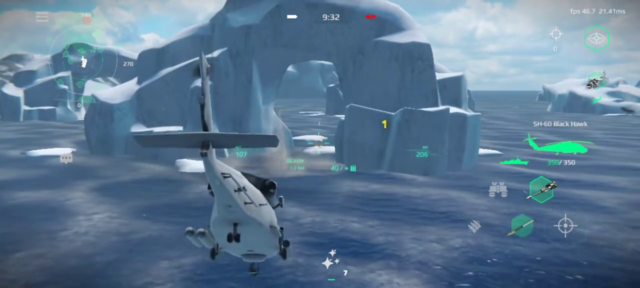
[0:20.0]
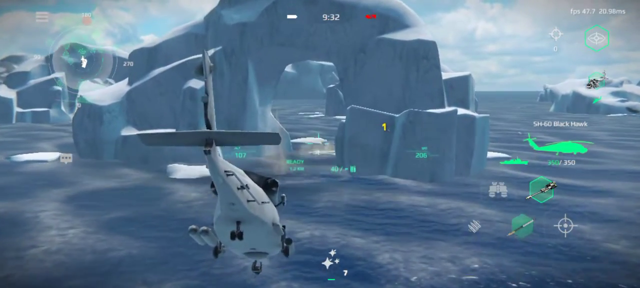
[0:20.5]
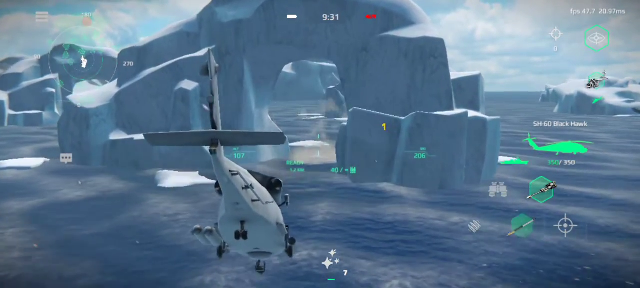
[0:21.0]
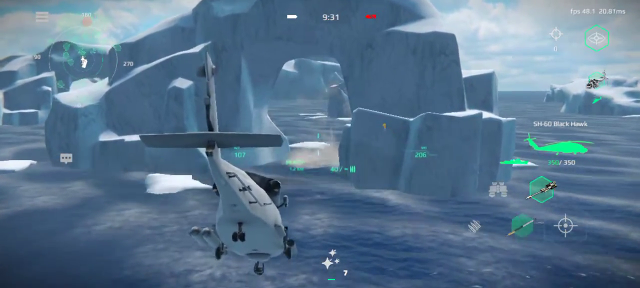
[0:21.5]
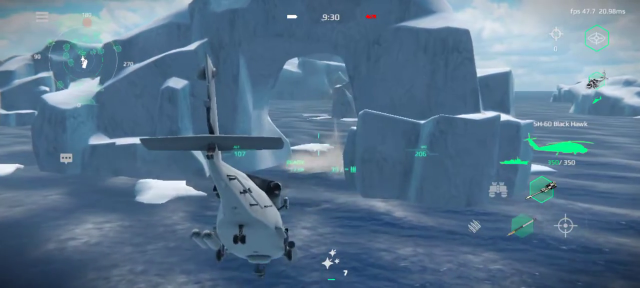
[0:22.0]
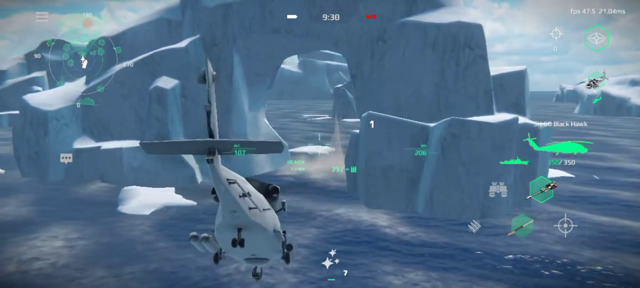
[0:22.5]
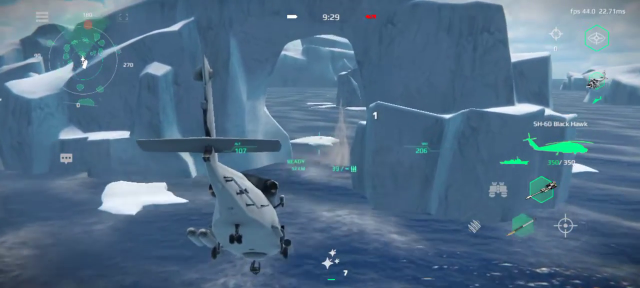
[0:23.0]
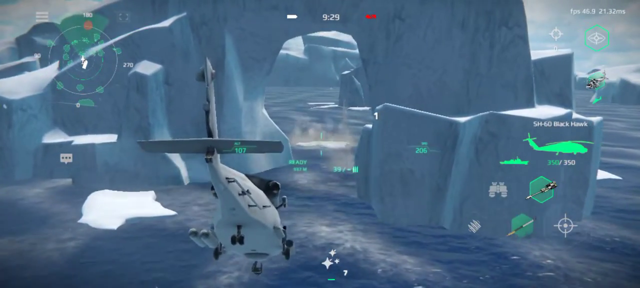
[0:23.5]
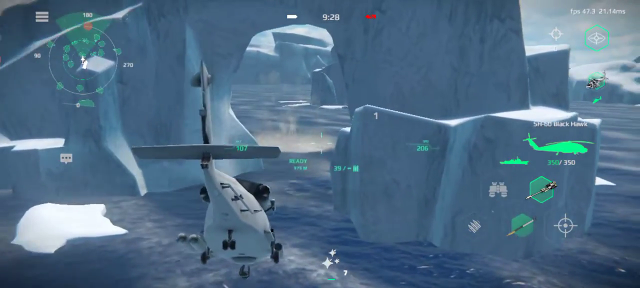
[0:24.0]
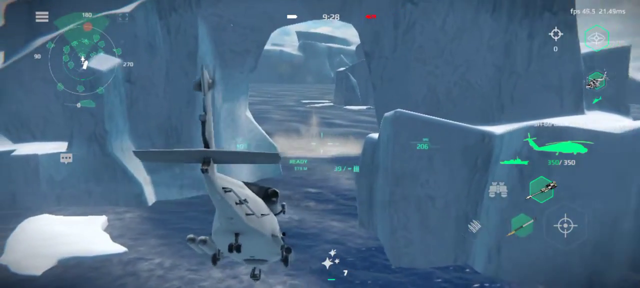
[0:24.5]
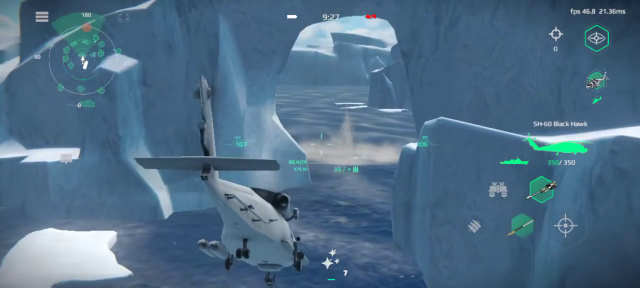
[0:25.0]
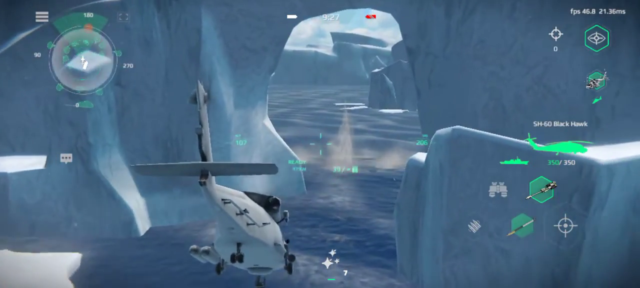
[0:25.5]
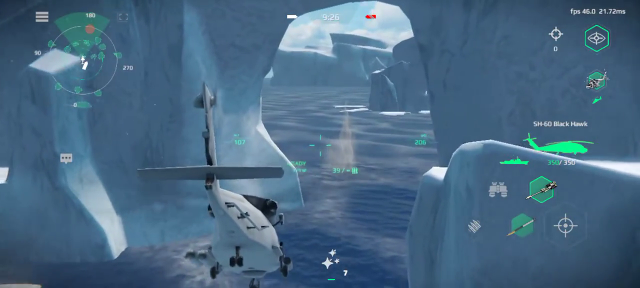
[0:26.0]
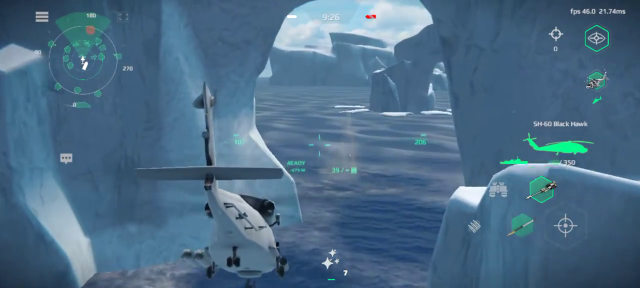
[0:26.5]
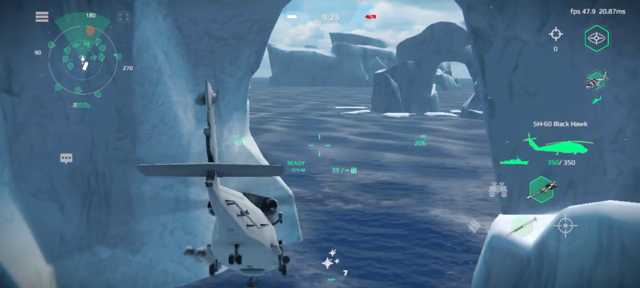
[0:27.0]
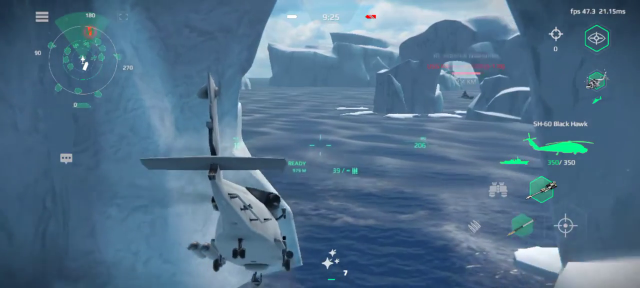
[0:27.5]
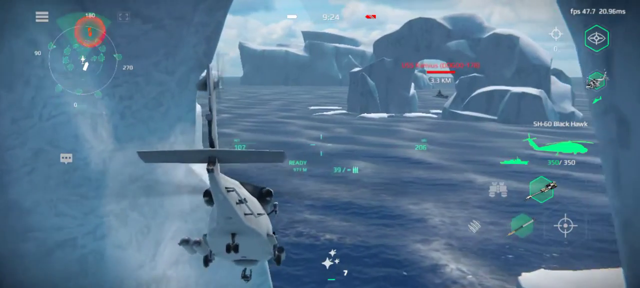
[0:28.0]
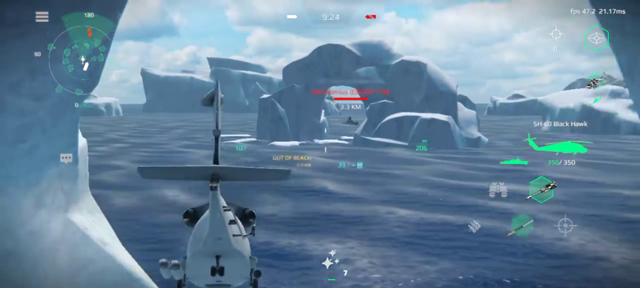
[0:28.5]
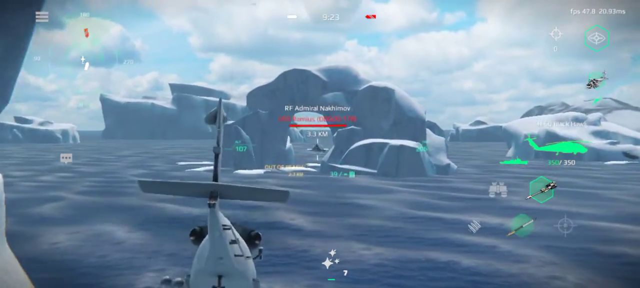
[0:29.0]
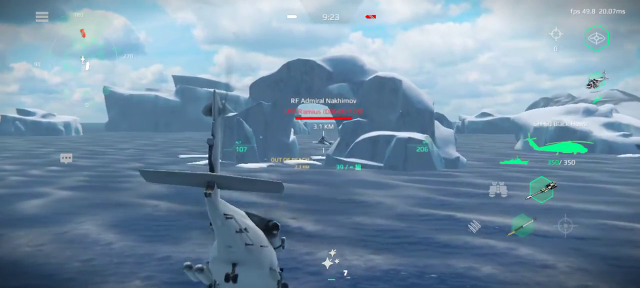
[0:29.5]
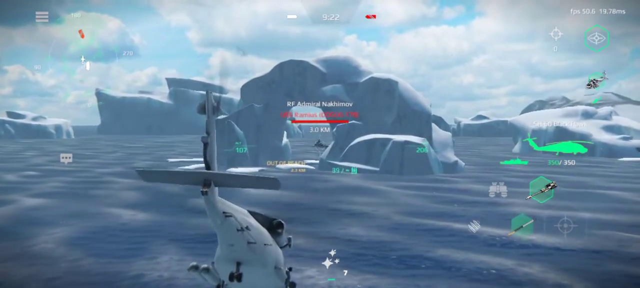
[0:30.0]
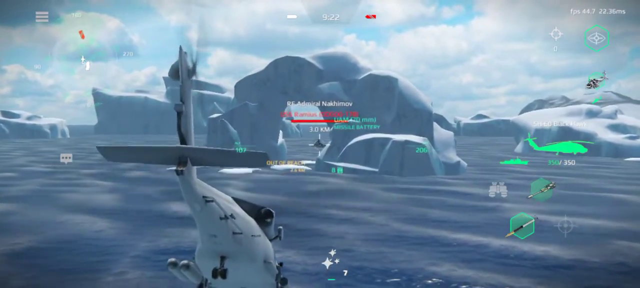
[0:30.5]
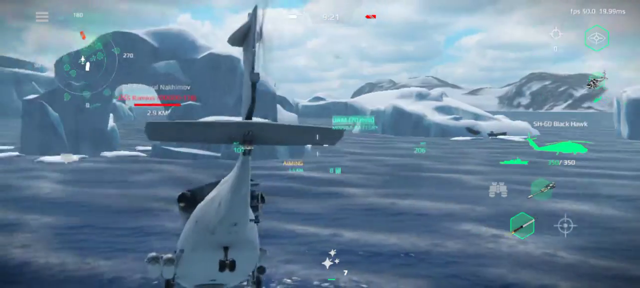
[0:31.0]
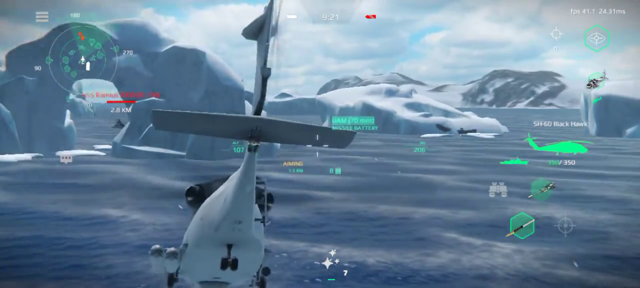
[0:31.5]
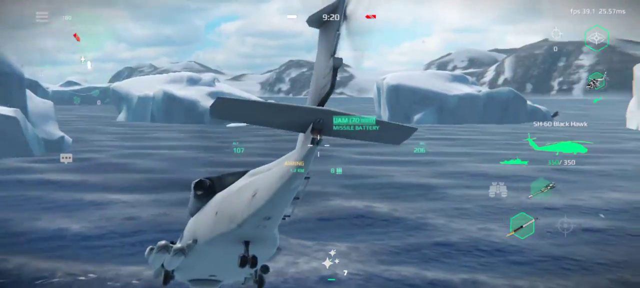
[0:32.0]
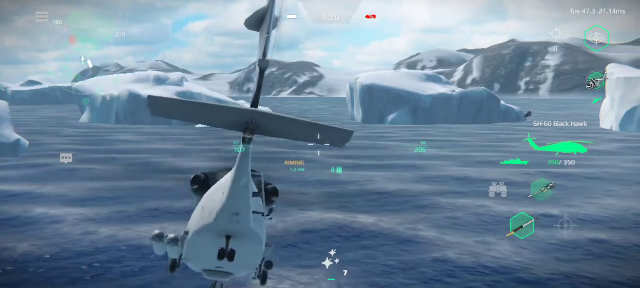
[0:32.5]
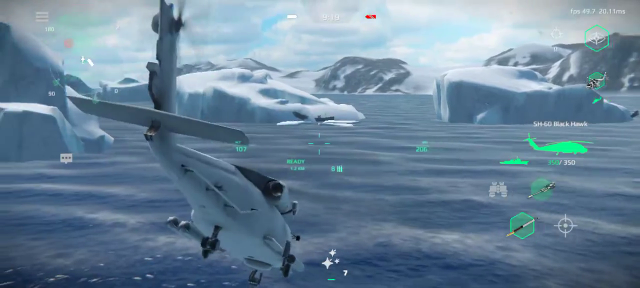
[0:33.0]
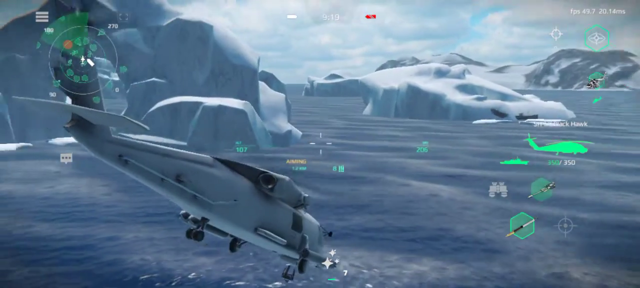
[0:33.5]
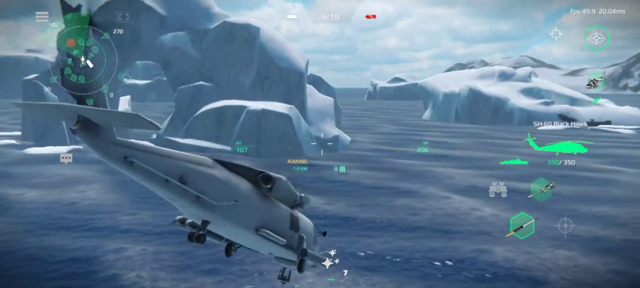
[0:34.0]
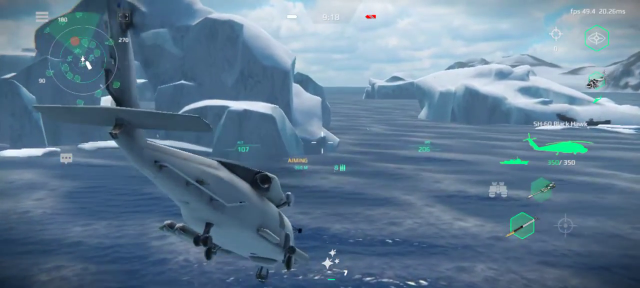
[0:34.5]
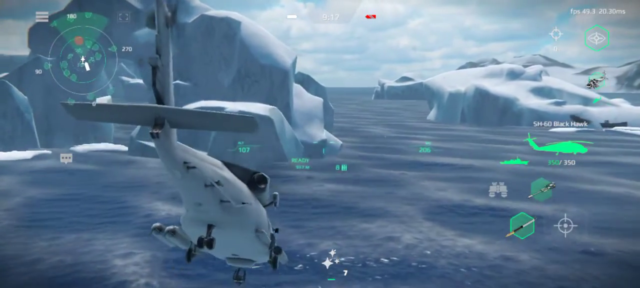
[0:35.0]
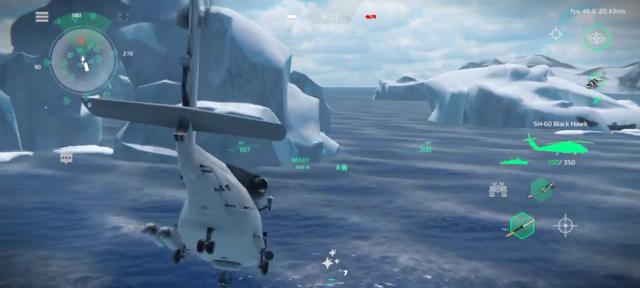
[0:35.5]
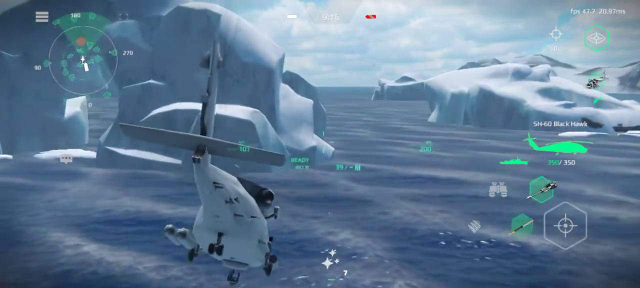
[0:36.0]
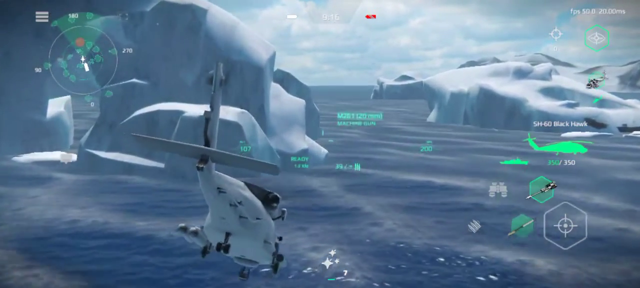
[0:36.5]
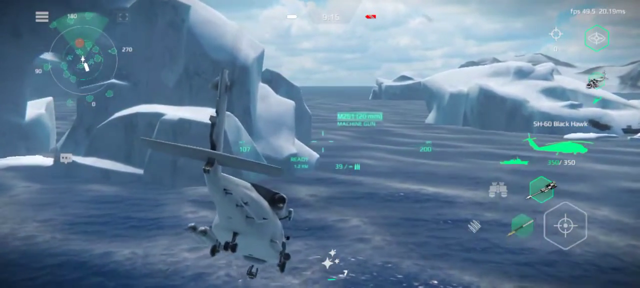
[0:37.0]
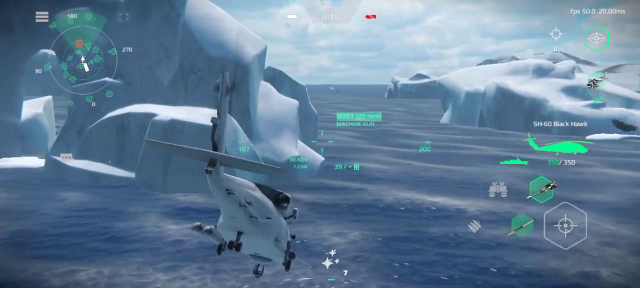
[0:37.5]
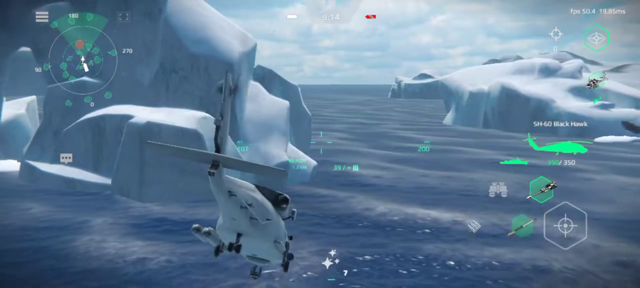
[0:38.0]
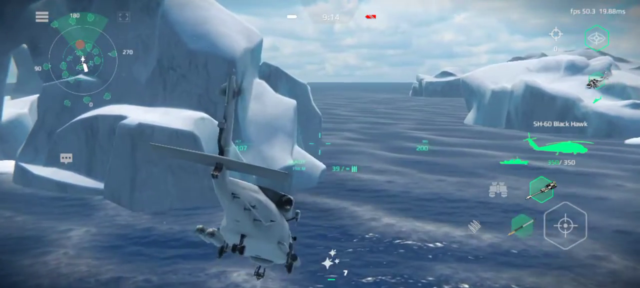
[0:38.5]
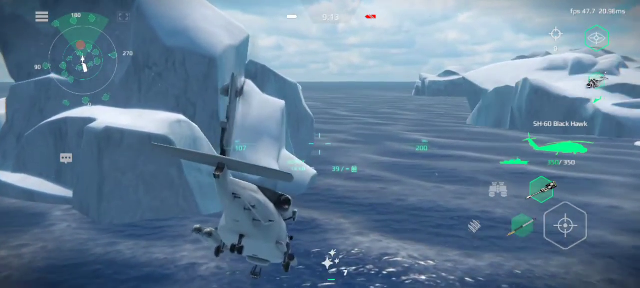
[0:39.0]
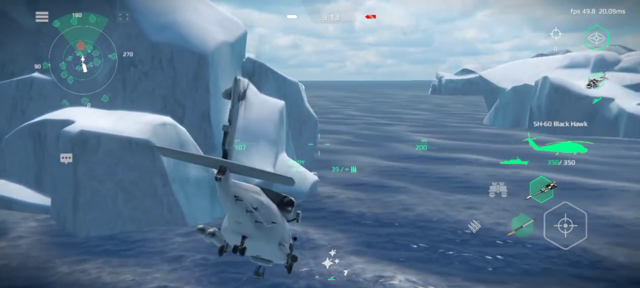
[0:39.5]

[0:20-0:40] The view is behind a helicopter, apparently a Black Hawk, with an overlay on the right-hand side of the screen showing a green Black Hawk helicopter, a green ship, and a white set of binoculars. The helicopter goes in between a glacier that has a hole in it, flying through the hole. The helicopter then has its nose slanted and pointed down toward the body of water, which looks calm and is bluish. The water shows some shadowing and sort of ripples from the helicopter moving close to the surface. The helicopter looks like it is shooting some sort of missiles, which are yellow. A ship is off in the distance with a red stripe above it indicating the life it has left.